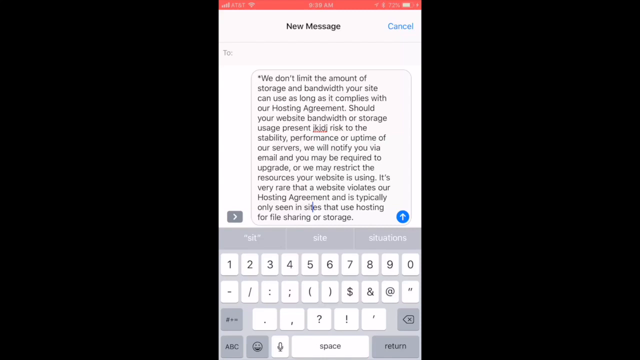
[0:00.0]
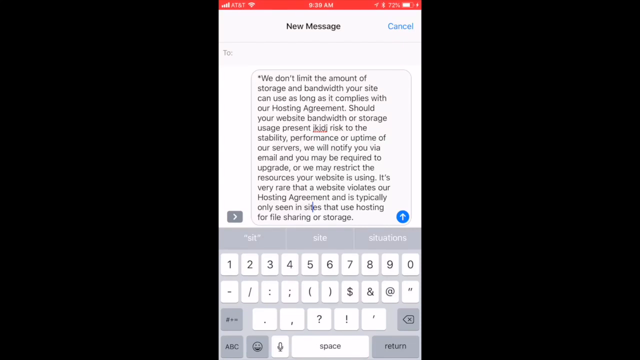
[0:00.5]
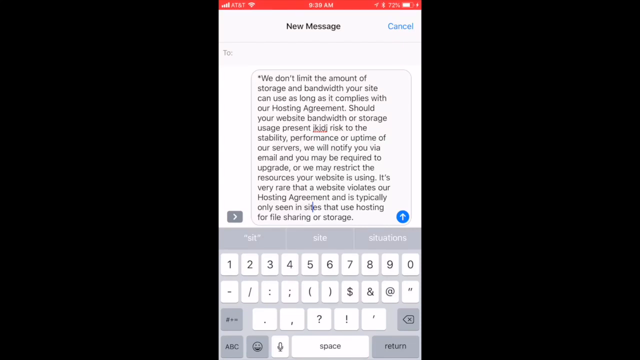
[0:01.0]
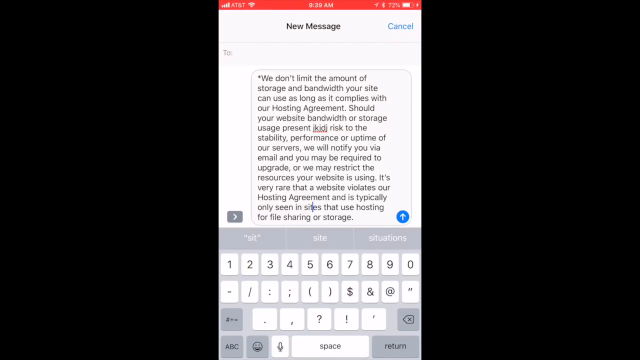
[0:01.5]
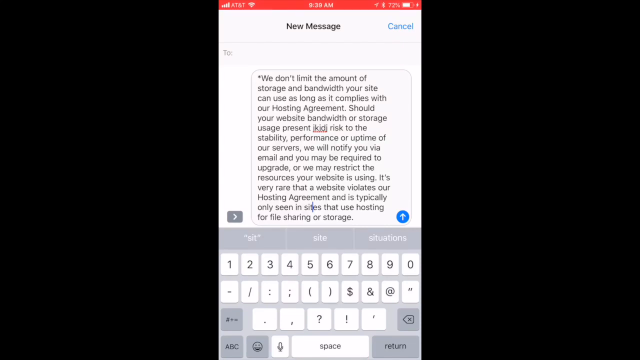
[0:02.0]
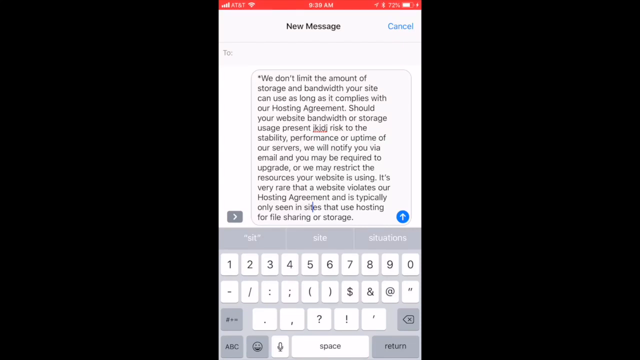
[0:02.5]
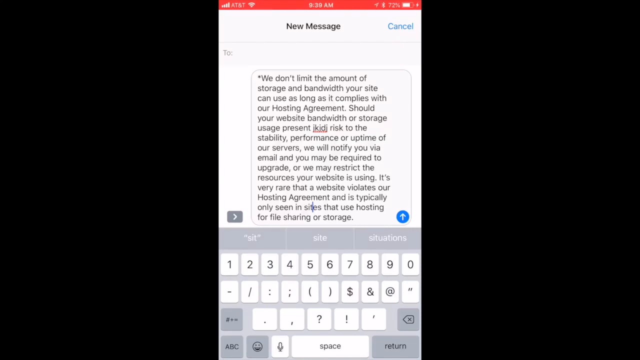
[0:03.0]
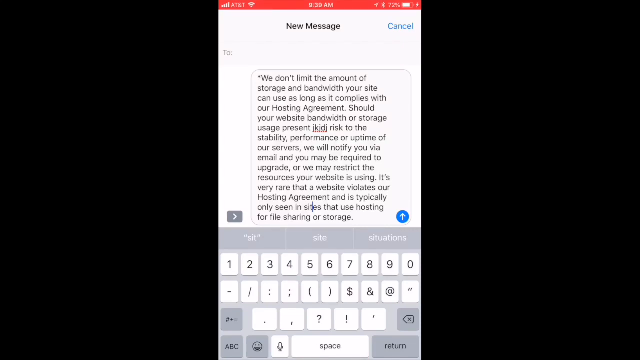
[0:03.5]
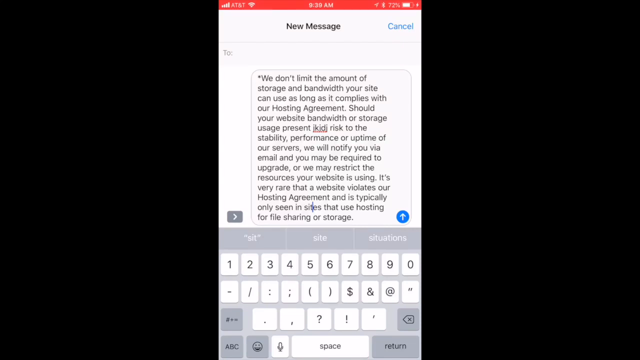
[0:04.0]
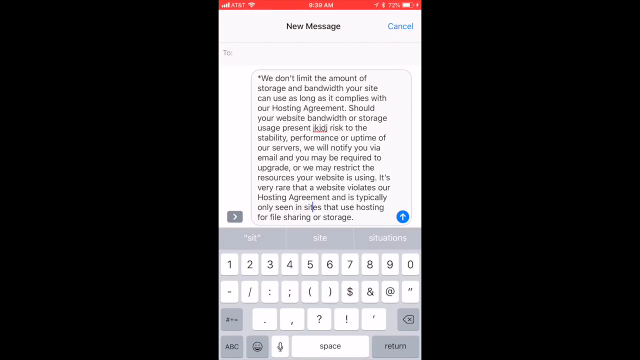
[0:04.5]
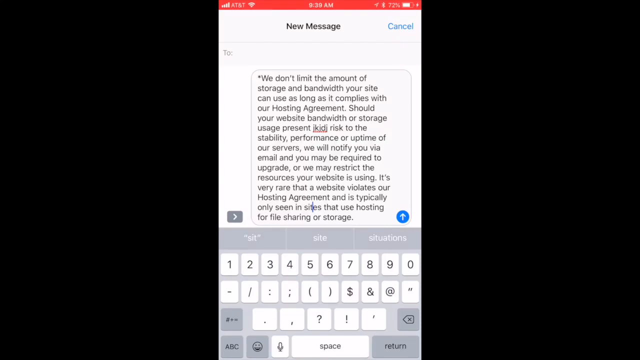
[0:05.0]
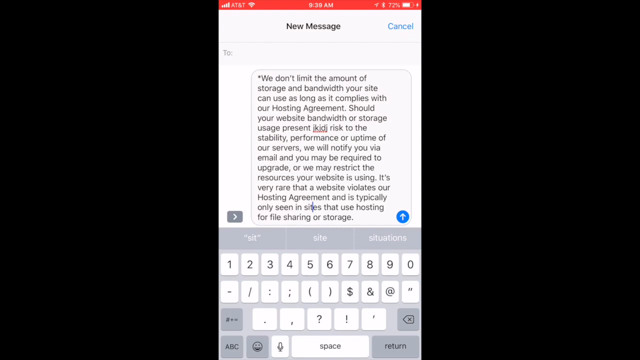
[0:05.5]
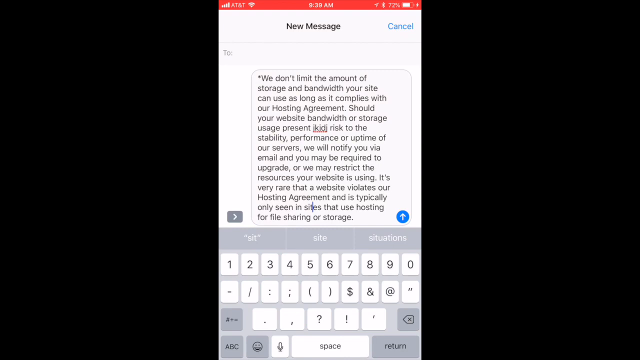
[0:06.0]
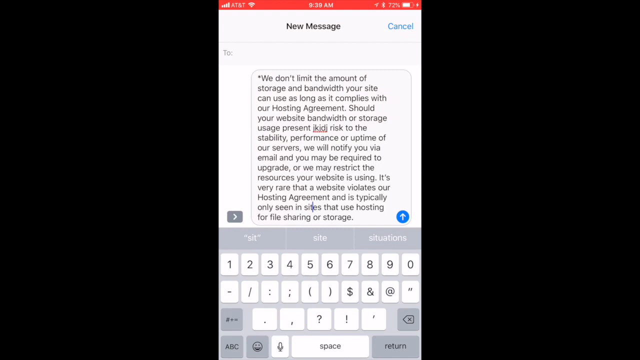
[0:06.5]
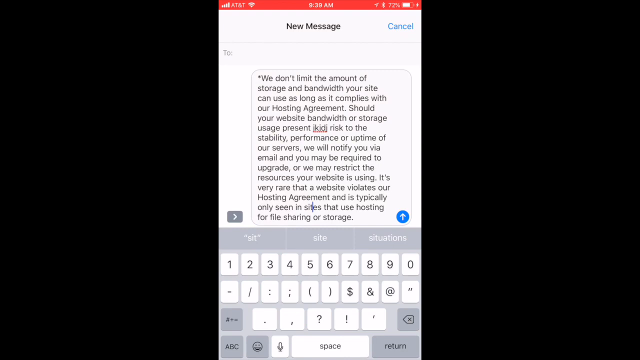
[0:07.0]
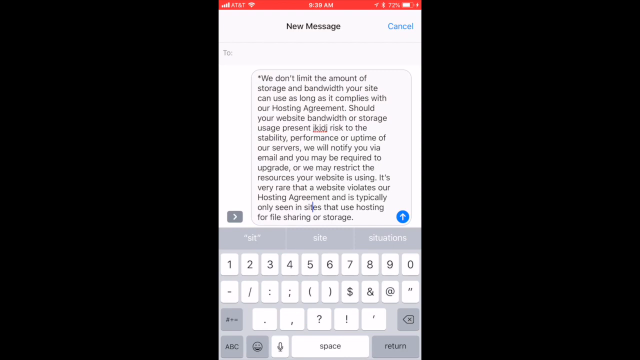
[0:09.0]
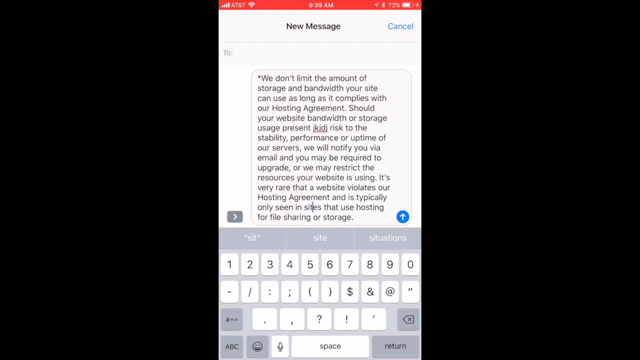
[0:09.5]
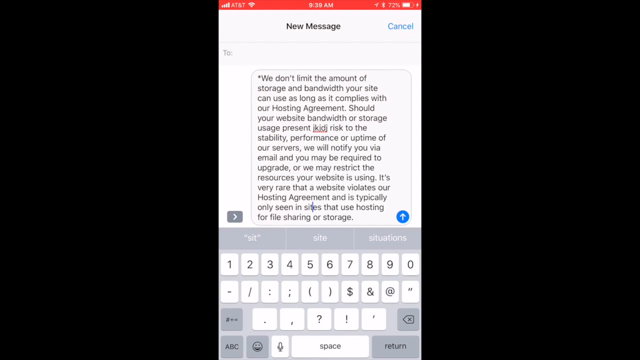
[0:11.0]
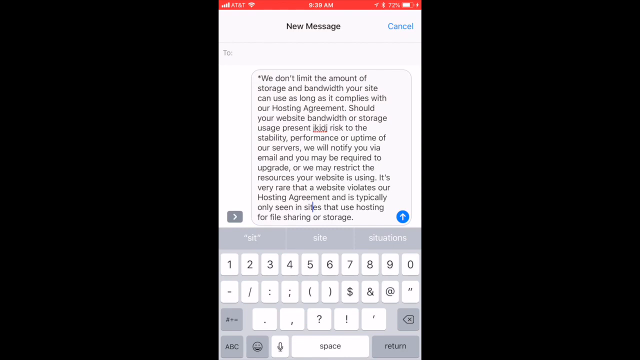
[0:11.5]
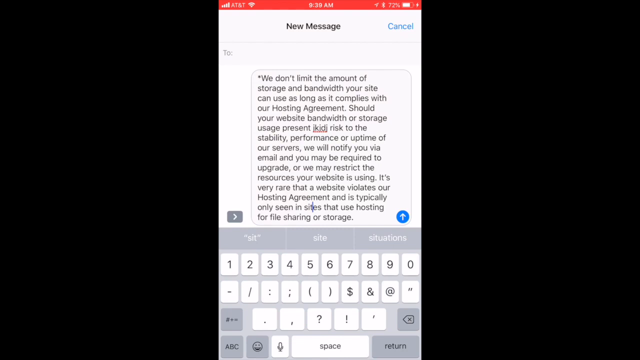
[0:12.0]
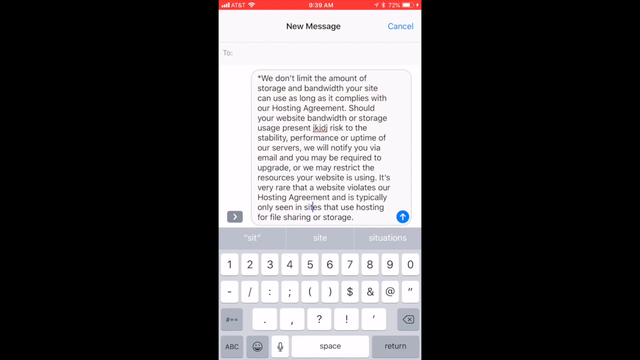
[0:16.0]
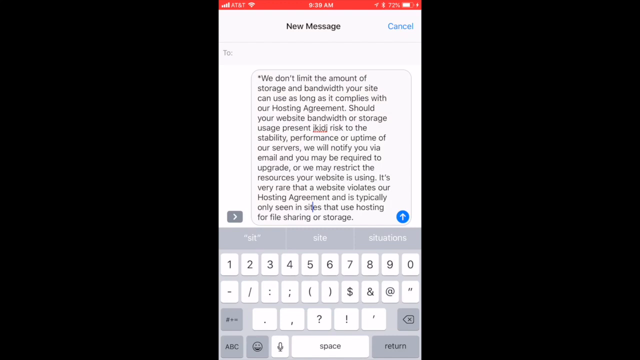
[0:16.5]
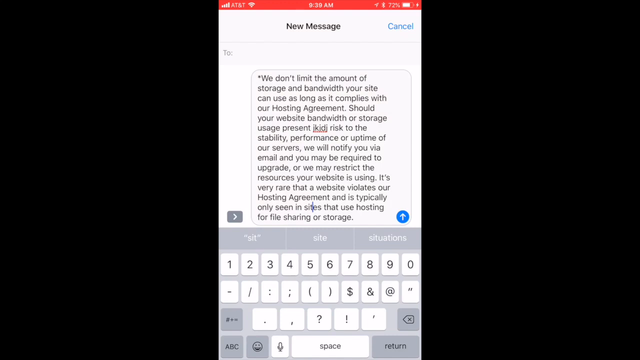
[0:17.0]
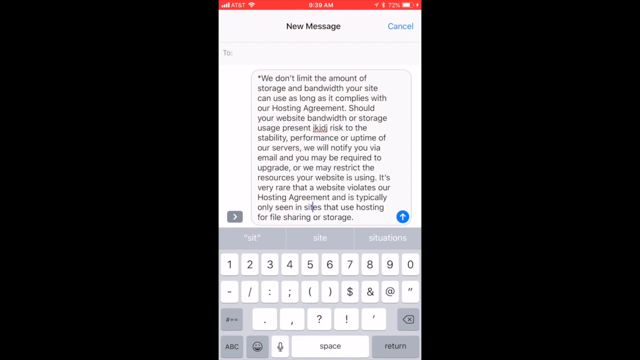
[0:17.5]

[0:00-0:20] A message is displayed that includes the text "we don't limit amount of storage"; much of the rest is unclear and cannot all be read. At the top it says "cancel", and there is an arrow that appears to be a send button. The background on the other side is blank, with nothing else shown.